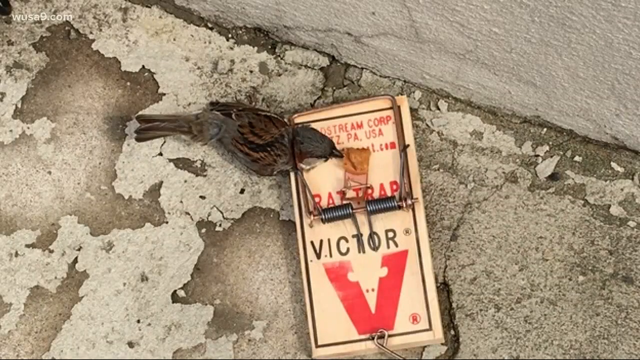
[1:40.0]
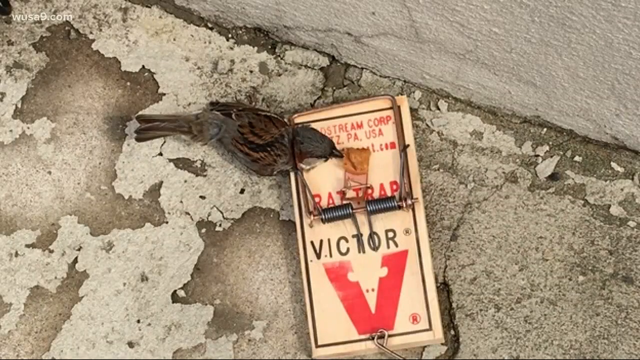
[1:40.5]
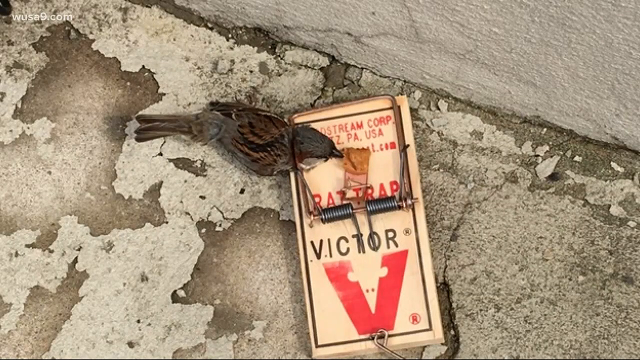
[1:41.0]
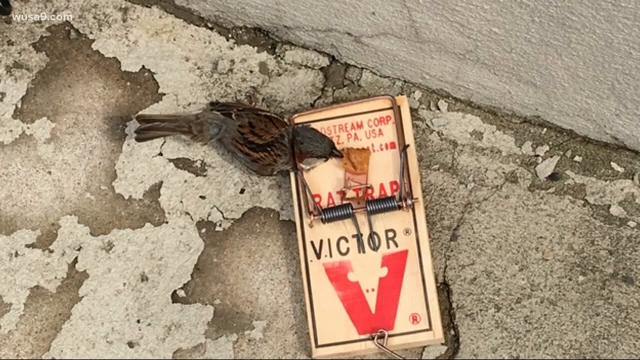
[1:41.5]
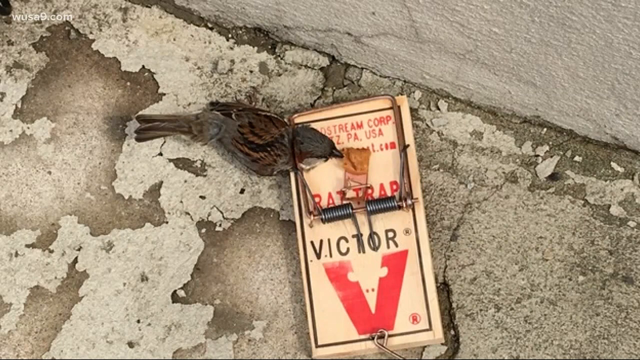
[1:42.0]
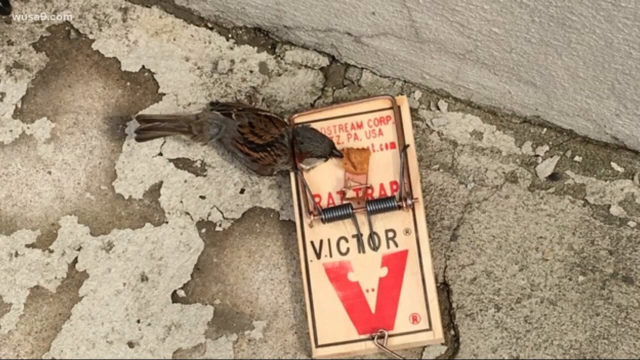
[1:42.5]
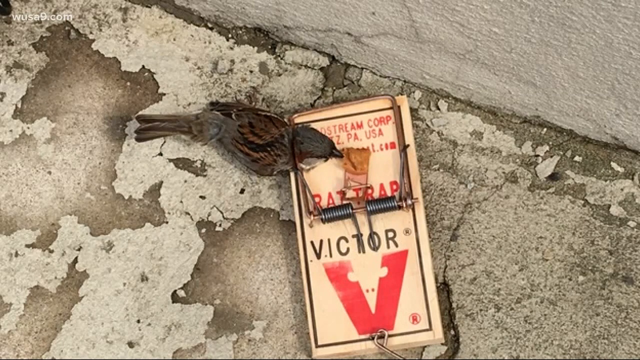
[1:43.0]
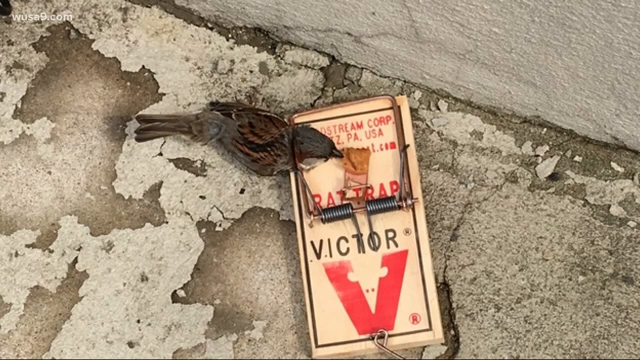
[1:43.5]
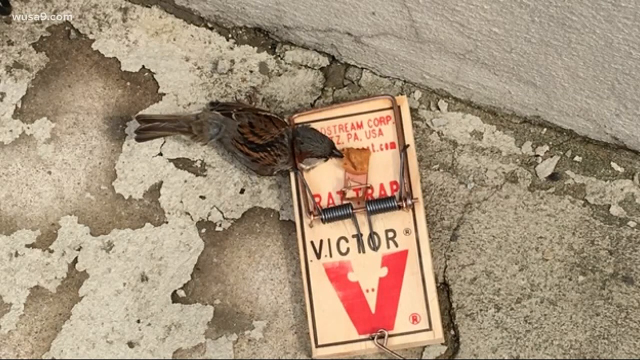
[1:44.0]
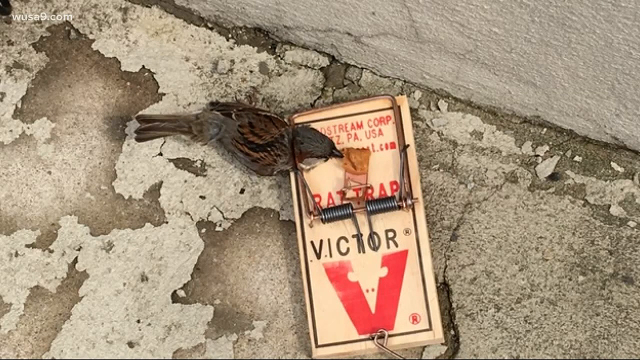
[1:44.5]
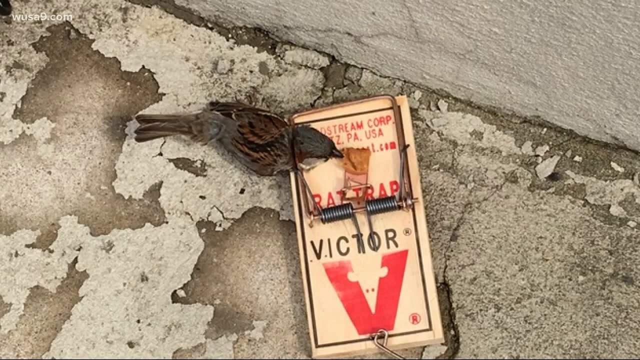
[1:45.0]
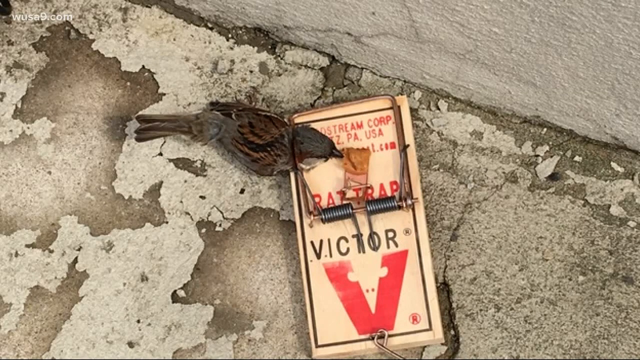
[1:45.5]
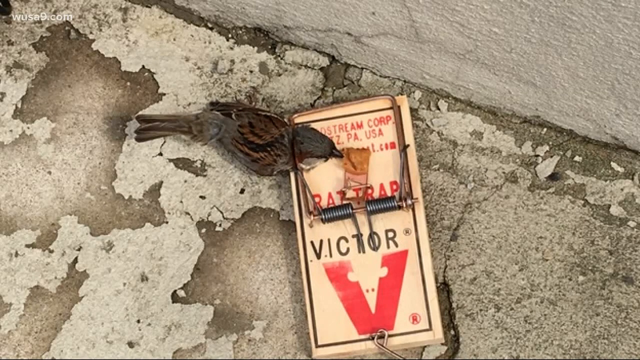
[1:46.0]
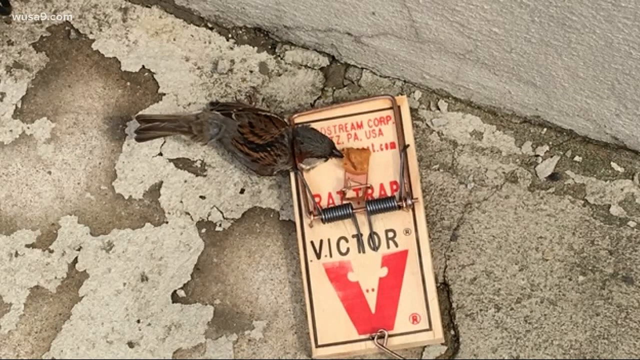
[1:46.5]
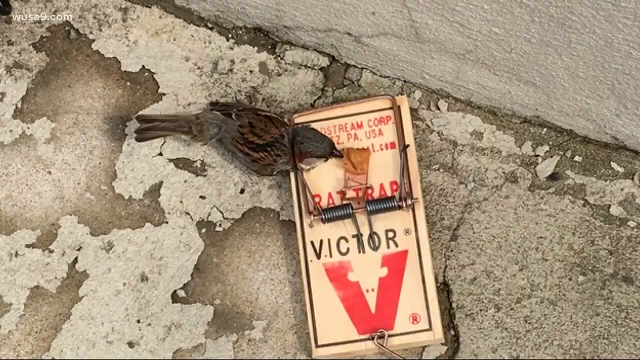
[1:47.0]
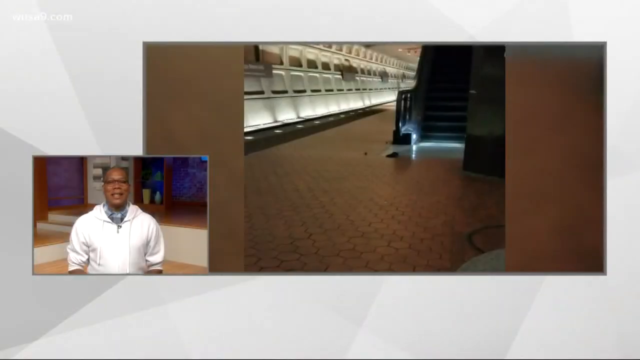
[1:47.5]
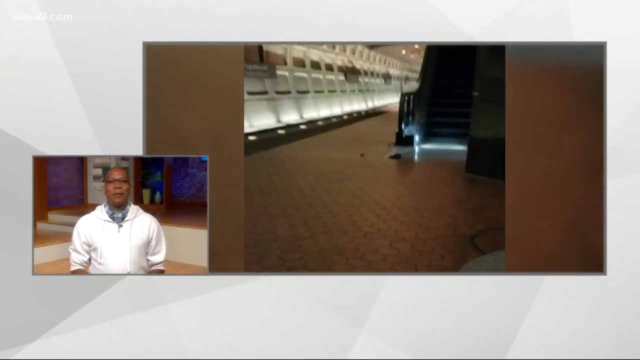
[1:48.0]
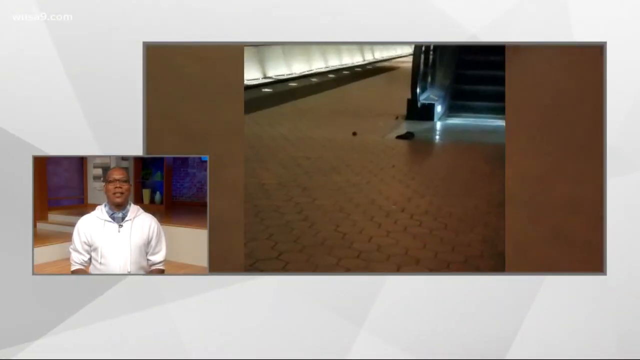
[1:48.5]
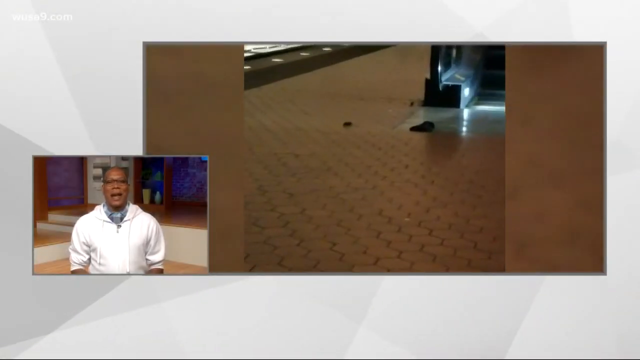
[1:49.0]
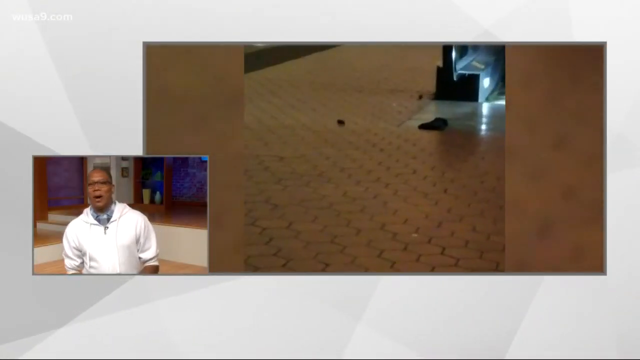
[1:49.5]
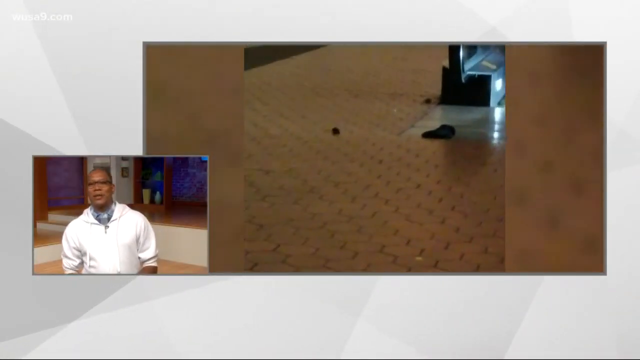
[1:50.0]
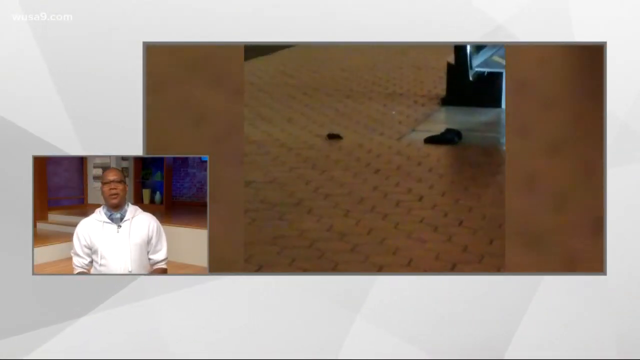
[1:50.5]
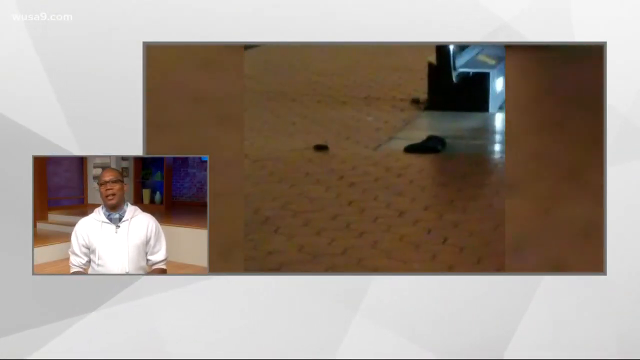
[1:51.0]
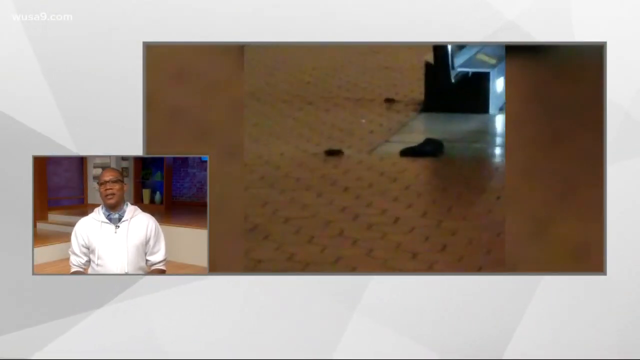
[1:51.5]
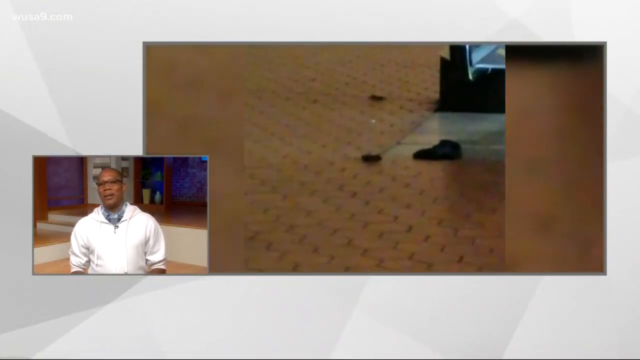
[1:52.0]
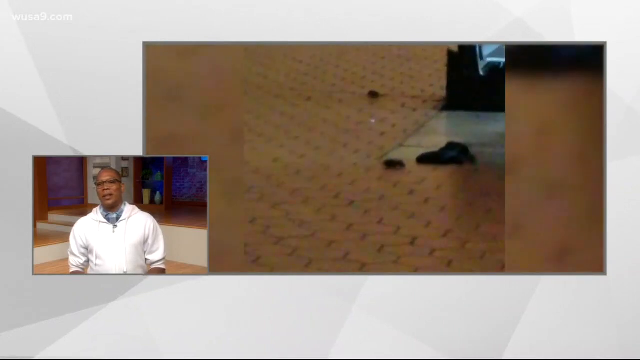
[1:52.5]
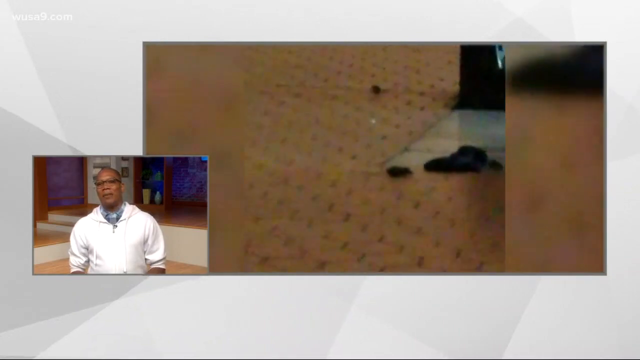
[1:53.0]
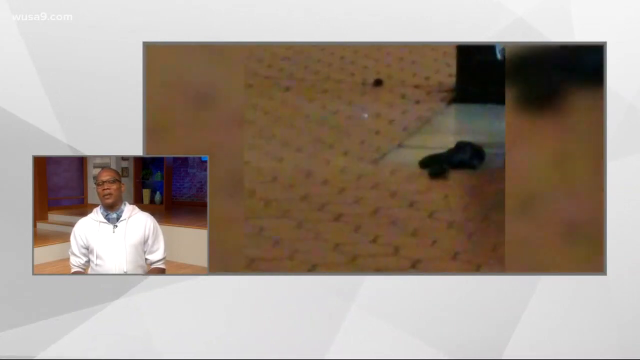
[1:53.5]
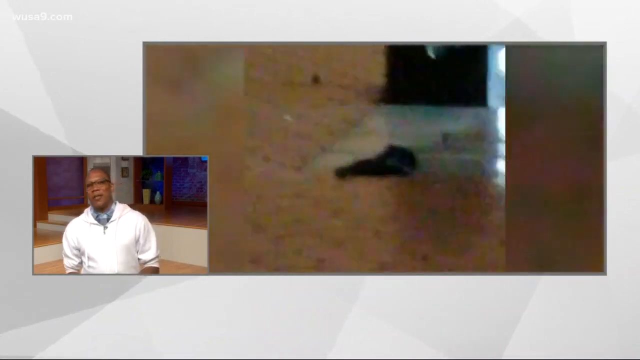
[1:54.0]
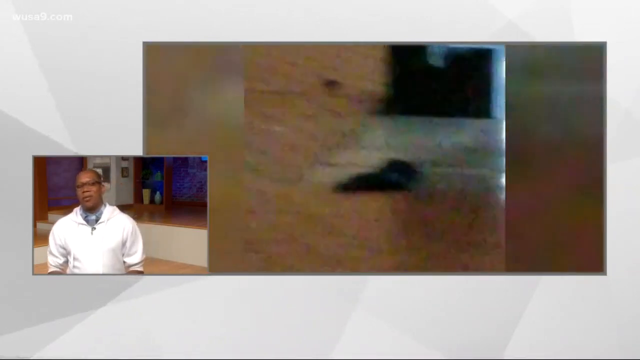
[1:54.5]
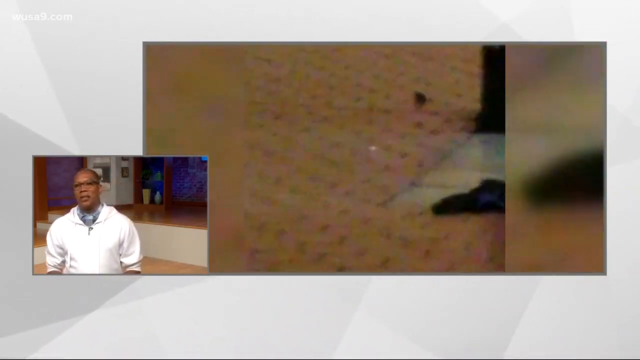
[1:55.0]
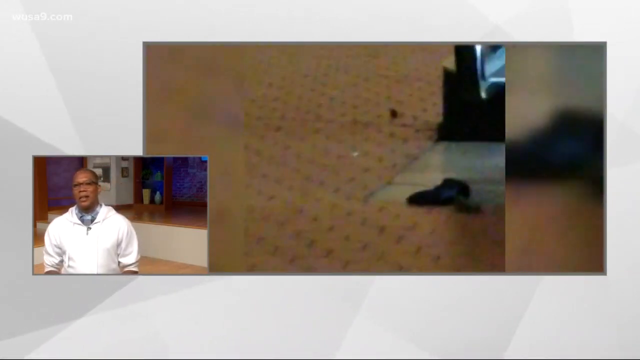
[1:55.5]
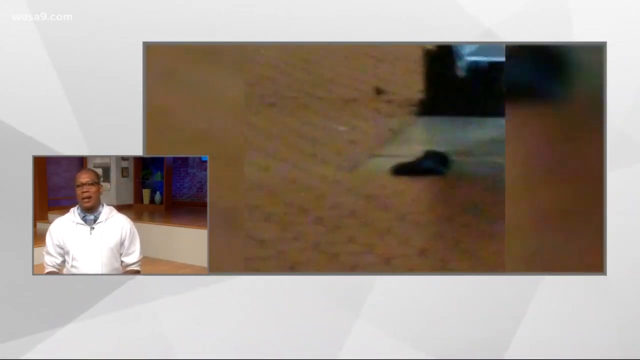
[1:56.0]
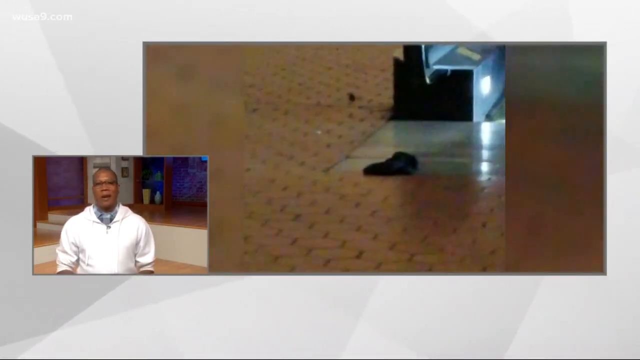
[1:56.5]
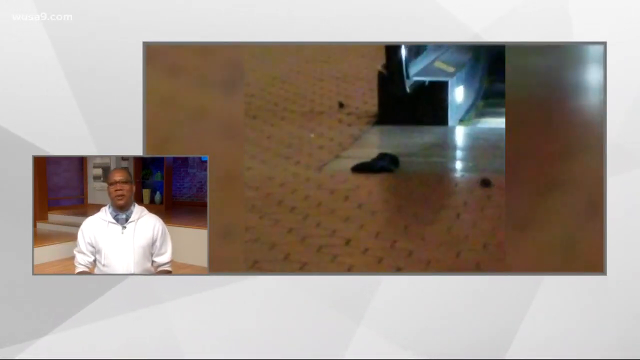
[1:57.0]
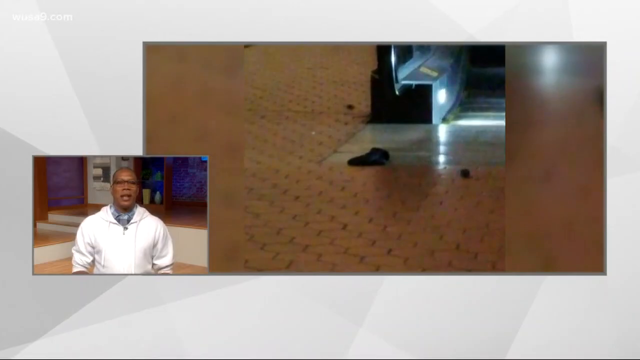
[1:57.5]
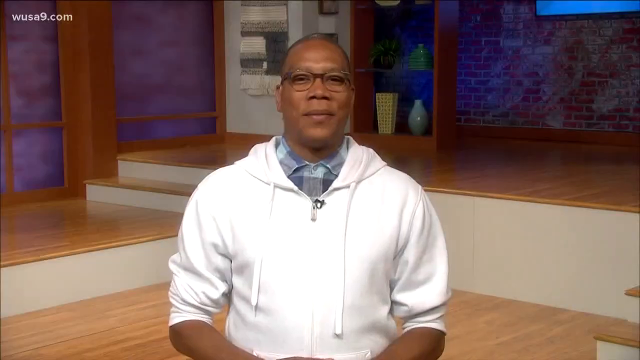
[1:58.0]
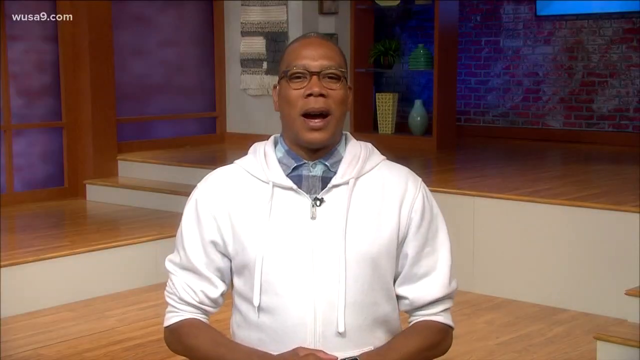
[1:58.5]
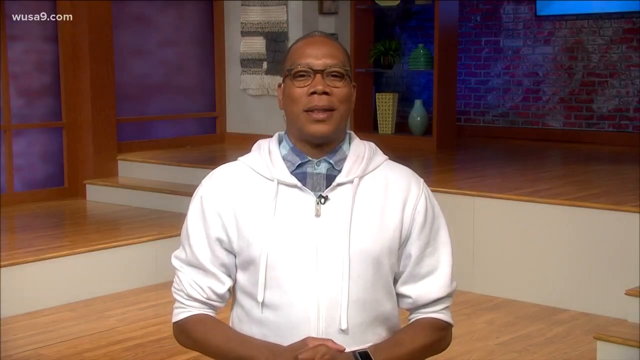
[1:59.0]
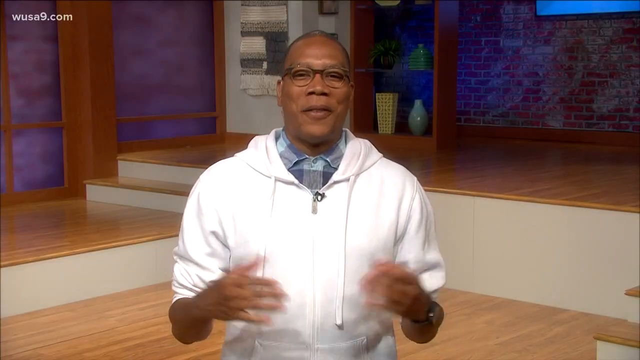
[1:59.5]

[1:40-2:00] A rat trap is on the worn-out concrete ground, with the words 'Rat Trap' written in red and the name 'Victor' in black. The trap looks old. Instead of a rat, a black bird is trapped on it; it cannot fly away because its head is in the trap, and its beak is on the bait. The video then cuts to a split screen: on the left, an African-American man in a white hoodie and a checked shirt speaks, looking at the camera; on the right is footage of rats crawling on a floor. The right-side video zooms in on one rat crawling toward the right while another rat behind it crawls in the opposite direction. Another rat then appears on the right side of the screen, and the video zooms out.